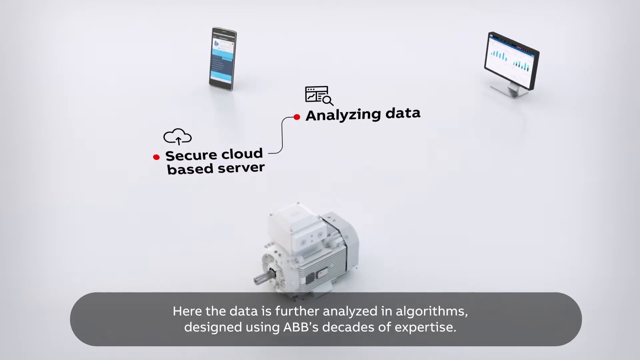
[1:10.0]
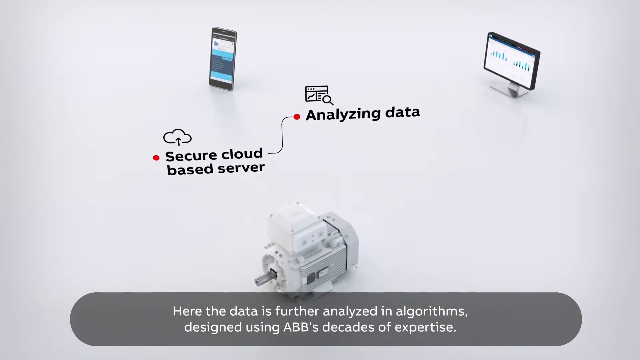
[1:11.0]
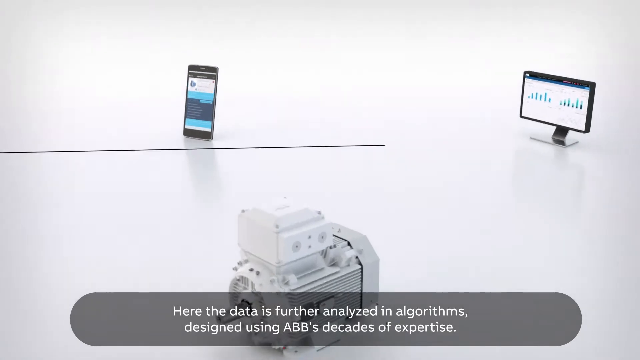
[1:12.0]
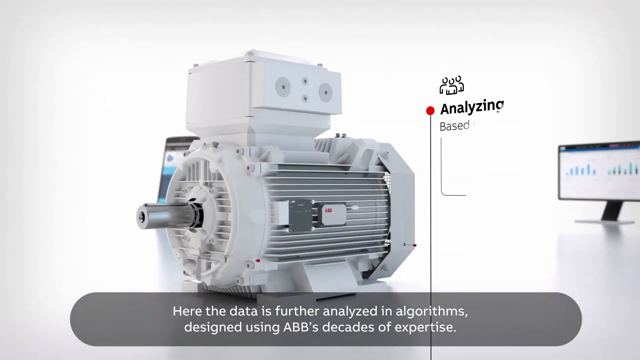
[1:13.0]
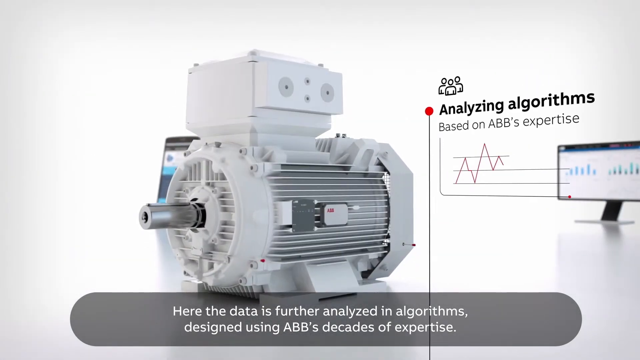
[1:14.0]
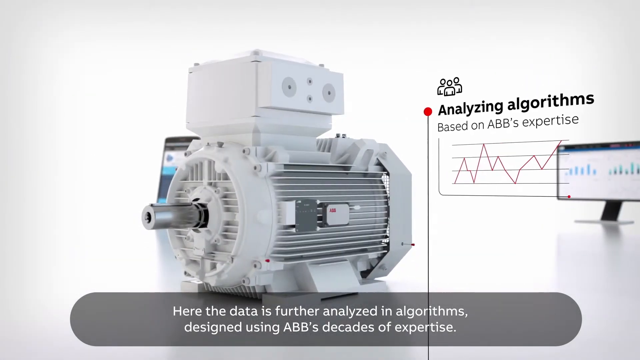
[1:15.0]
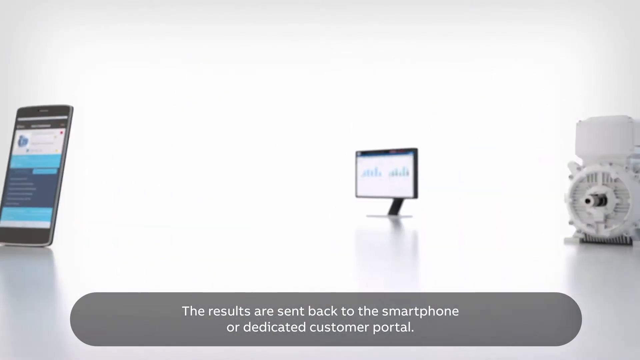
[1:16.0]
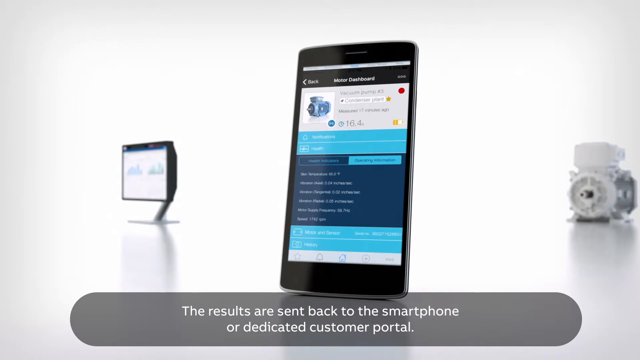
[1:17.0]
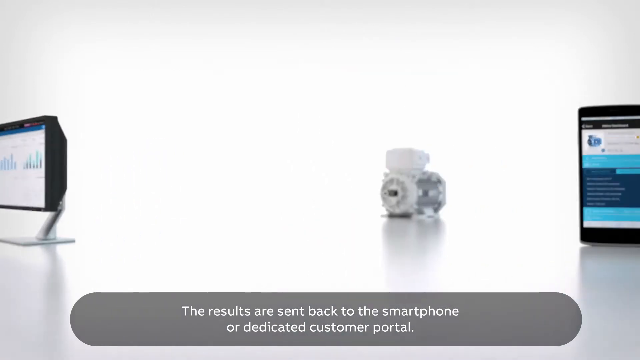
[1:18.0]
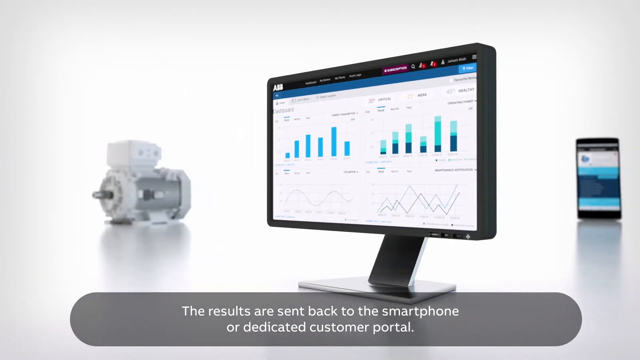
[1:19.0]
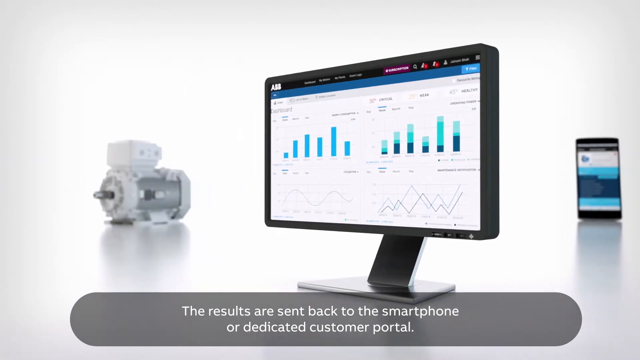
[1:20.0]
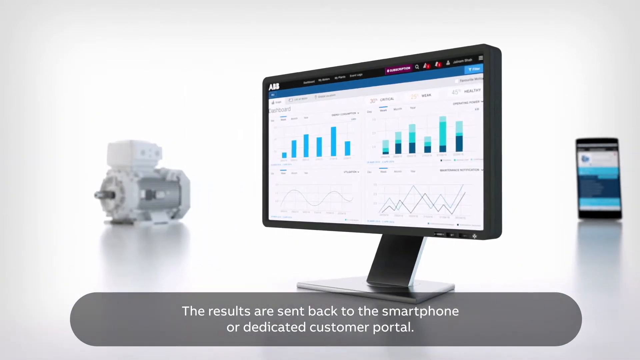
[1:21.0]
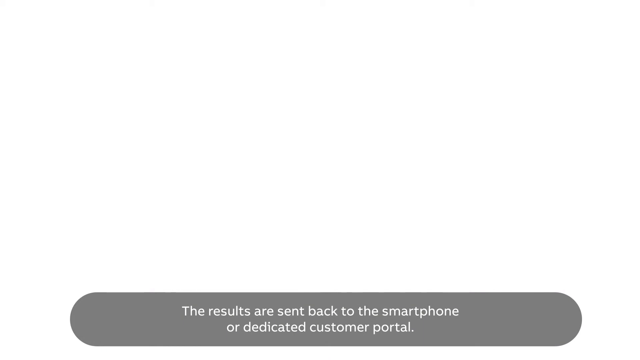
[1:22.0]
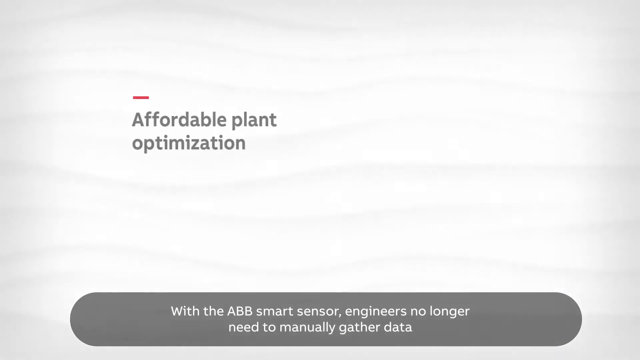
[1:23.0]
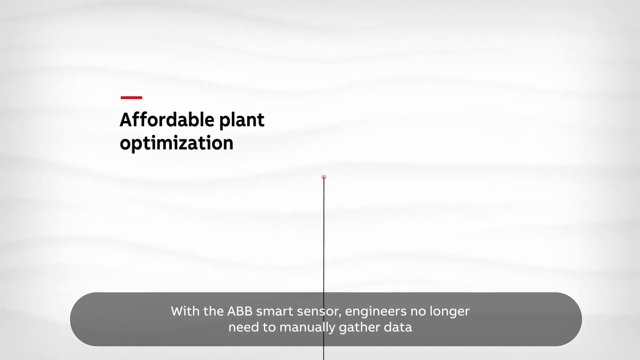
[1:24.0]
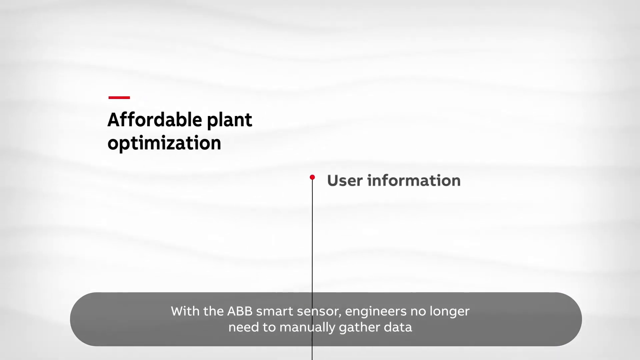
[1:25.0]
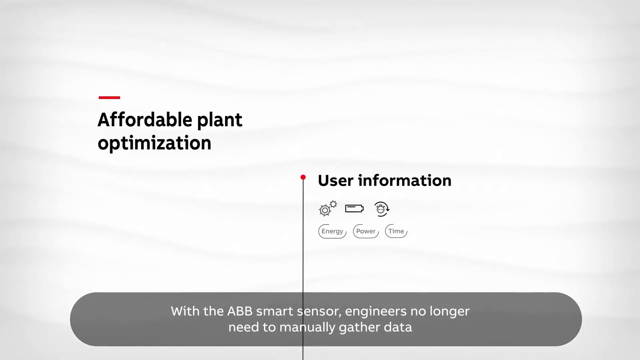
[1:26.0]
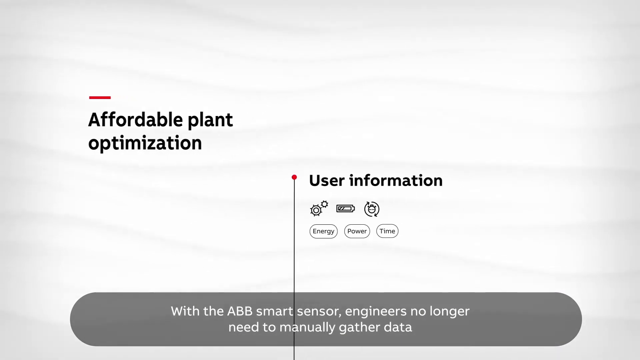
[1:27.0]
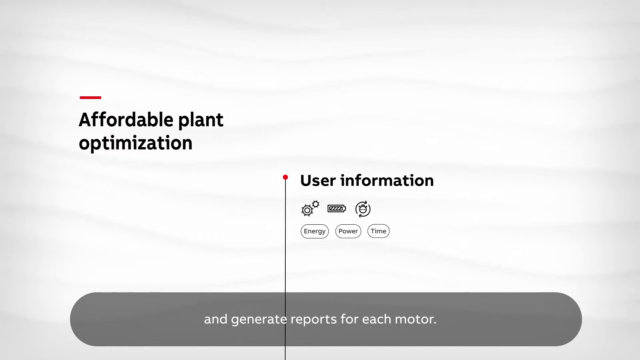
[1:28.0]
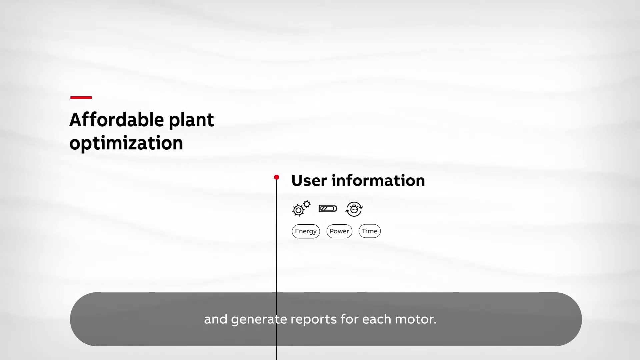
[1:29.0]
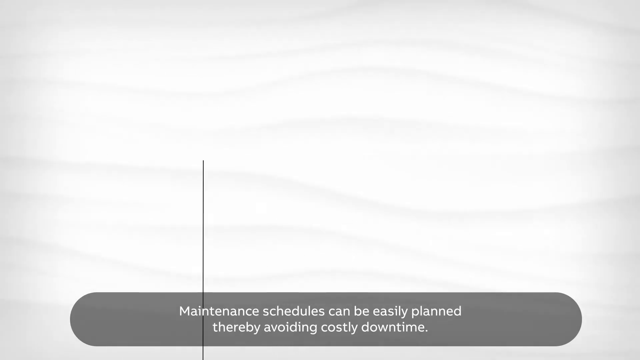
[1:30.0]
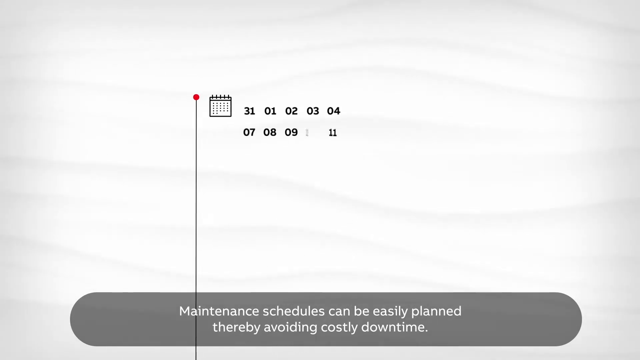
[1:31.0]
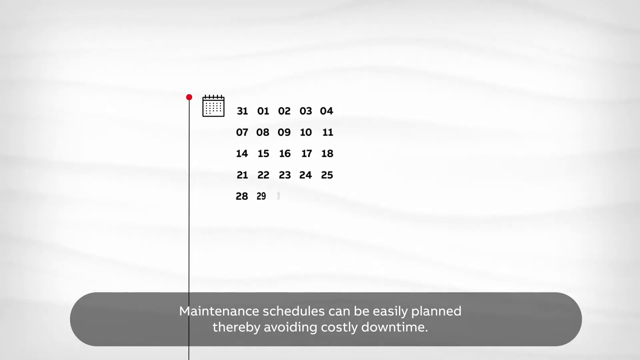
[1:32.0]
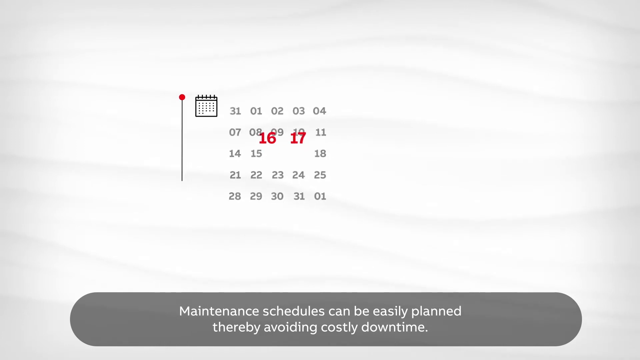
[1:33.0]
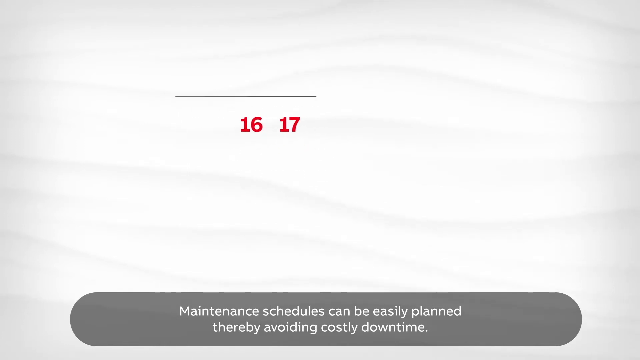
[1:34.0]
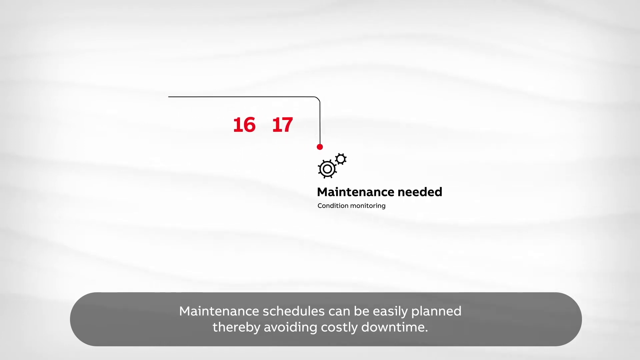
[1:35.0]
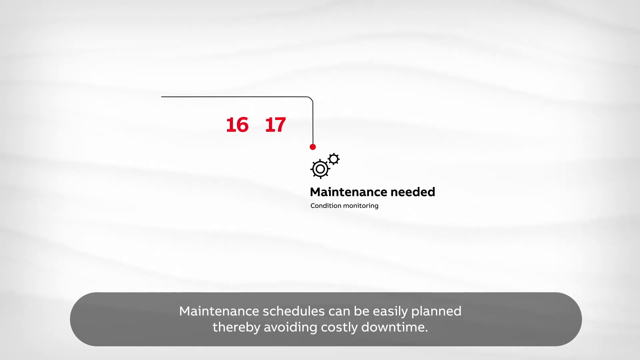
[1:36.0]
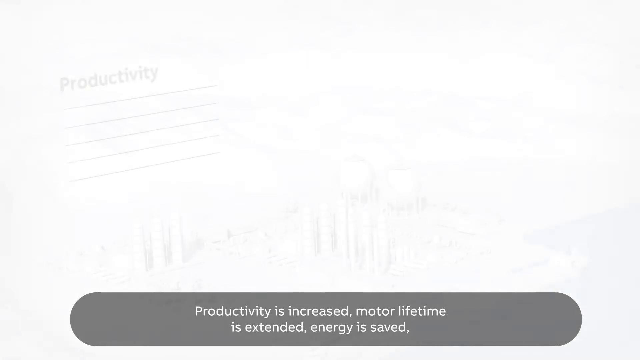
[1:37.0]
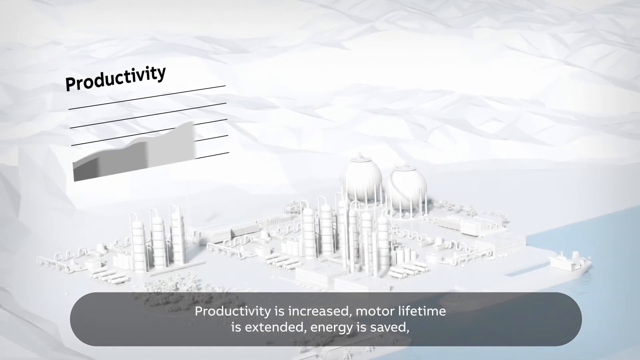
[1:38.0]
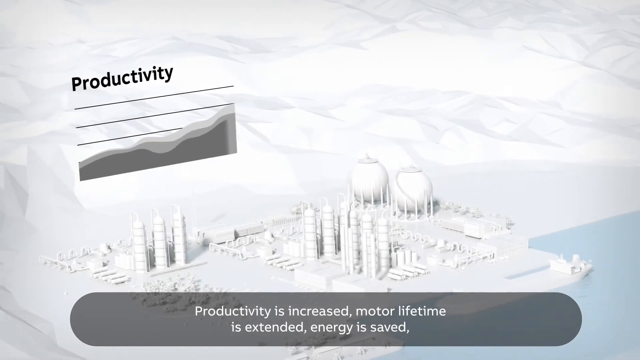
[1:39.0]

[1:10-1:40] The camera zooms in on a large machine, with text to the right of it that says "analyzing algorithms based on ABB's expertise," and at the bottom of the screen, "here the data is further analyzed and algorithms designed using ABB's decades of expertise." A sort of chart is visible. The view spins toward the phone, with text at the bottom reading "the results are sent back to the smartphone or dedicated customer portal," then swings over to the computer, whose screen shows the results: two bar charts and two line charts. That fades out, and text on a white background says "affordable plant optimization," with a banner at the bottom reading "with the ABB smart sensor, engineers no longer need to manually gather data." This transitions to a line emanating from the bottom of the screen with a point at the top labeled "user information," along with "energy, power, and time"; these symbols appear in a clip-art style, and the bottom of the screen reads "generate reports for each monitor." Next the bottom text reads "Maintenance schedules can be easily planned, thereby avoiding costly downtime," with a clip-art calendar showing two dates, 16 and 17, and "Maintenance needed." Then "productivity" appears, with "Productivity is increased. Motor lifetime is extended. Energy is saved." A 3D rendering of a town in white follows, with a white floor and all-white buildings, and then "benefits" appears.